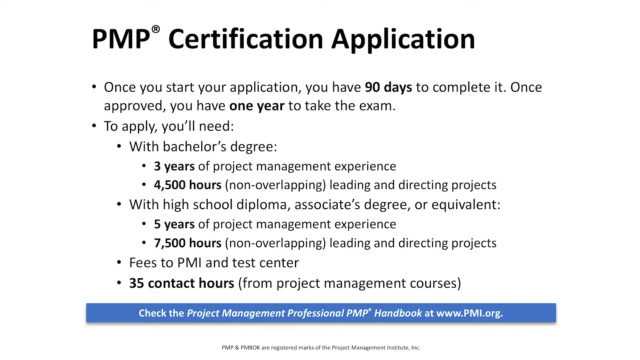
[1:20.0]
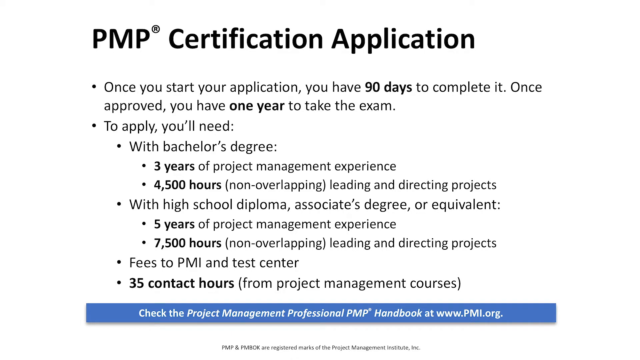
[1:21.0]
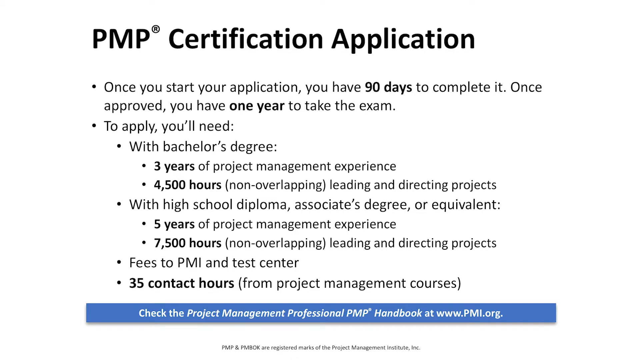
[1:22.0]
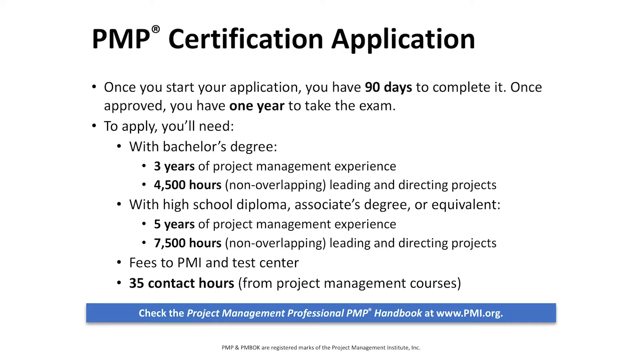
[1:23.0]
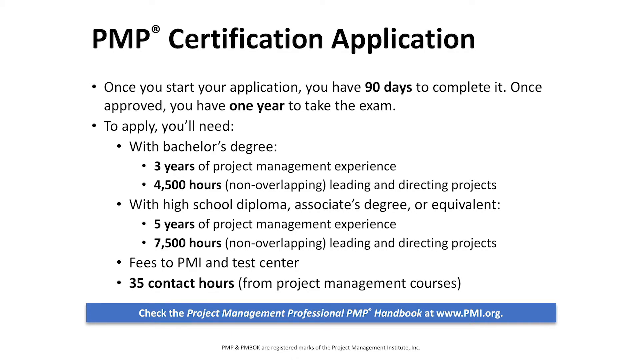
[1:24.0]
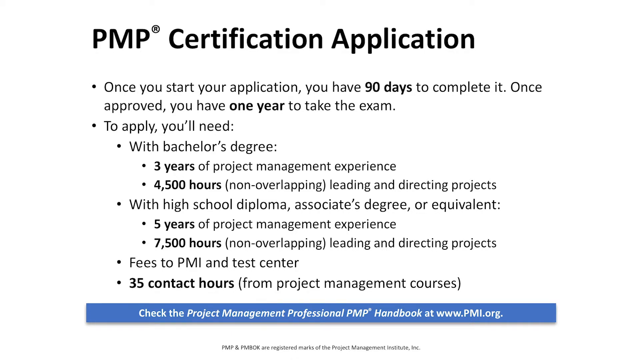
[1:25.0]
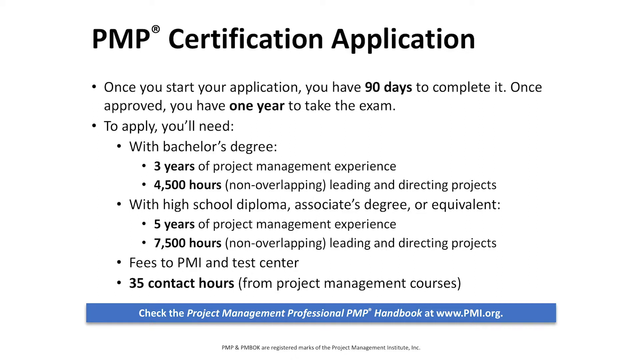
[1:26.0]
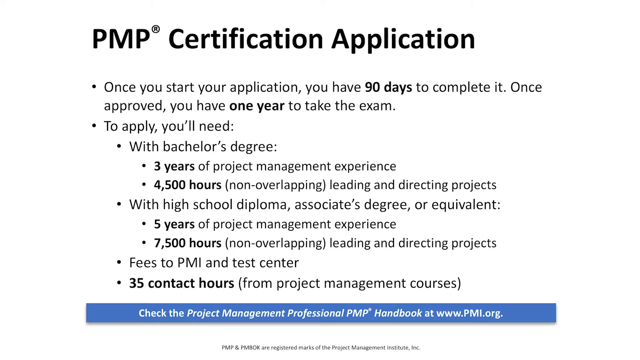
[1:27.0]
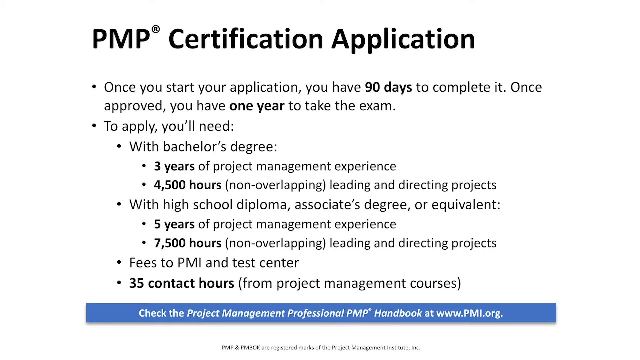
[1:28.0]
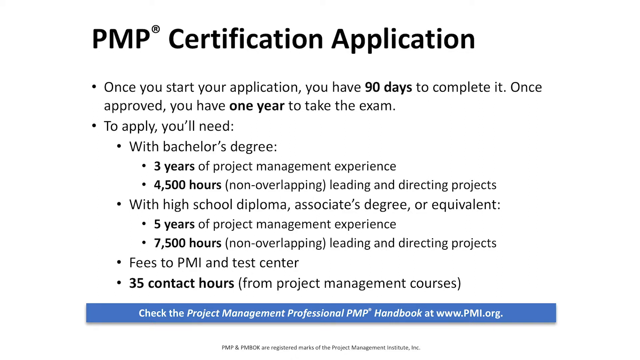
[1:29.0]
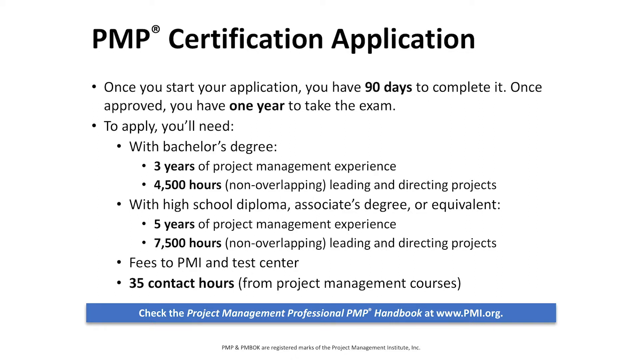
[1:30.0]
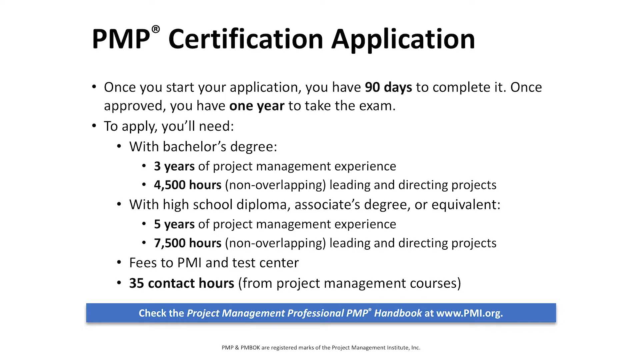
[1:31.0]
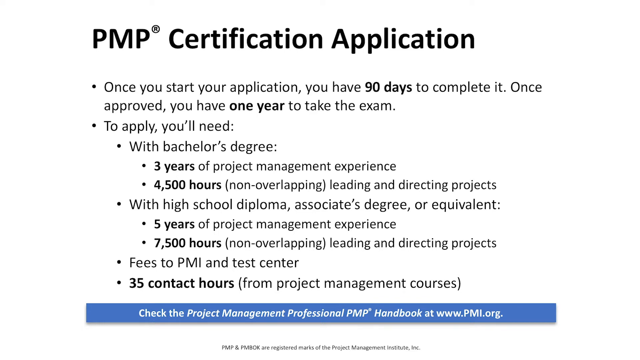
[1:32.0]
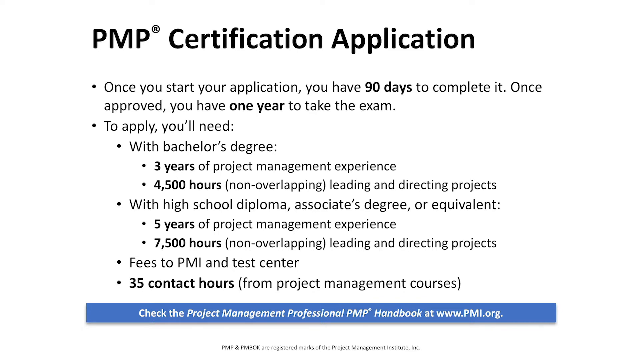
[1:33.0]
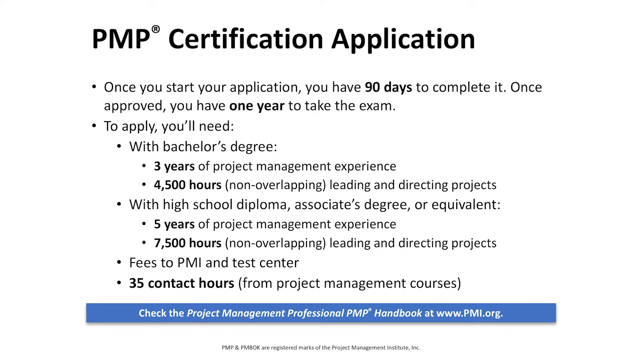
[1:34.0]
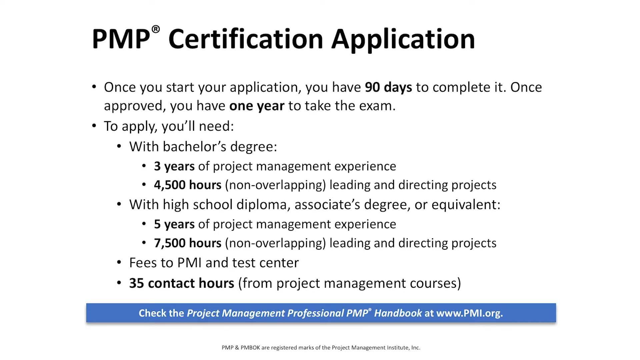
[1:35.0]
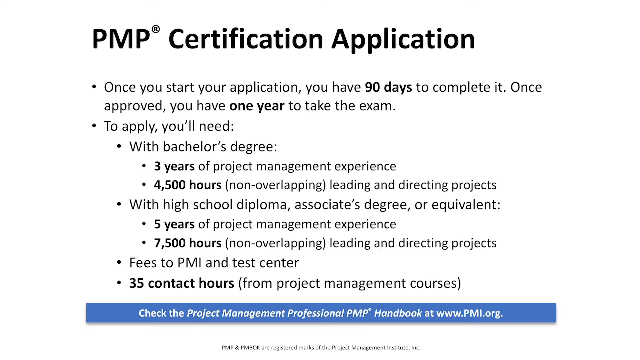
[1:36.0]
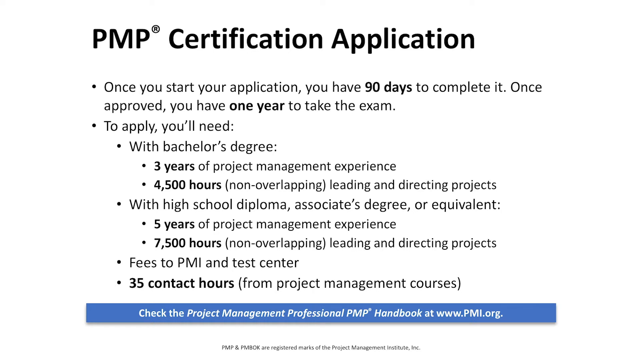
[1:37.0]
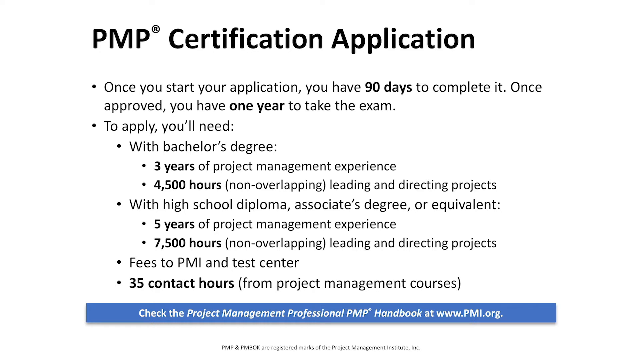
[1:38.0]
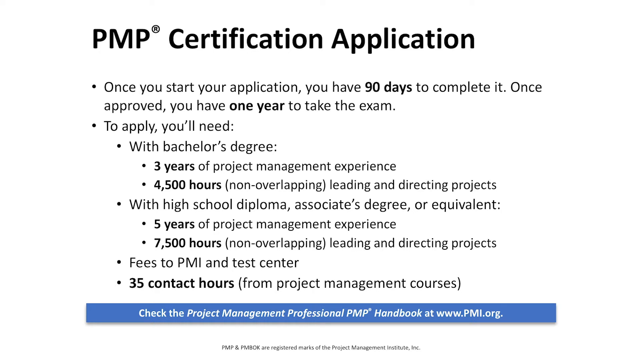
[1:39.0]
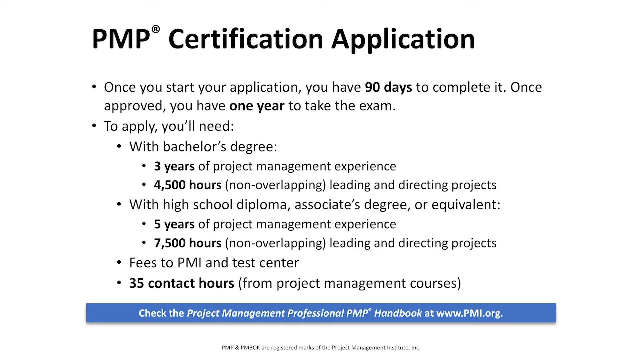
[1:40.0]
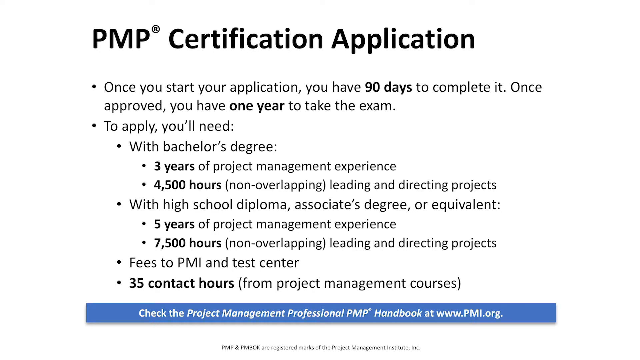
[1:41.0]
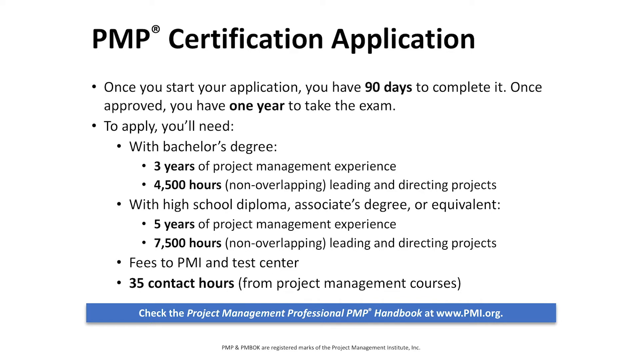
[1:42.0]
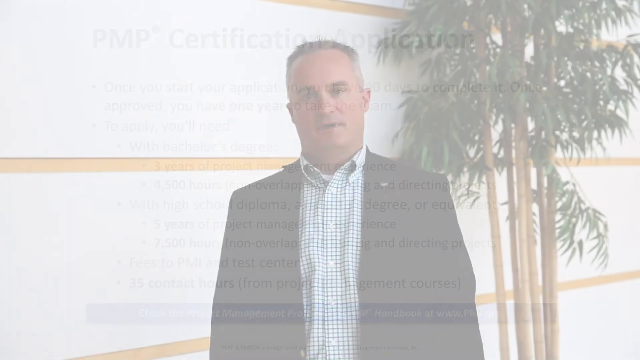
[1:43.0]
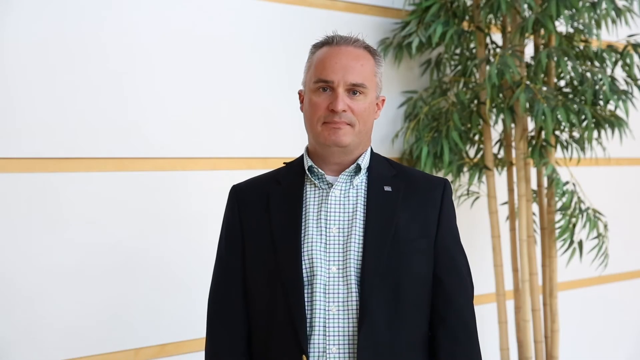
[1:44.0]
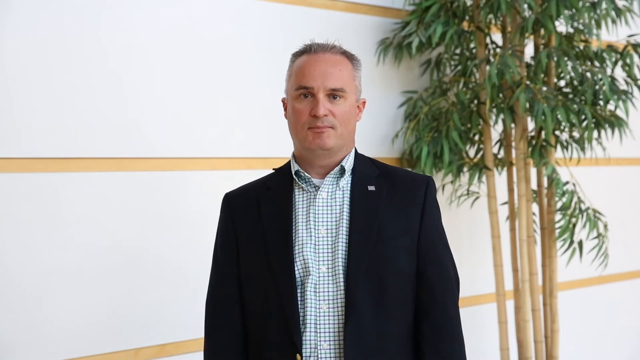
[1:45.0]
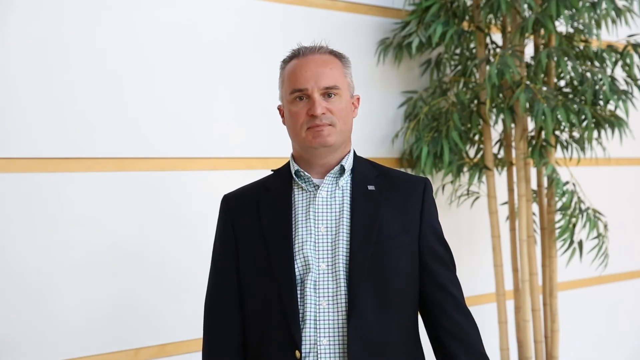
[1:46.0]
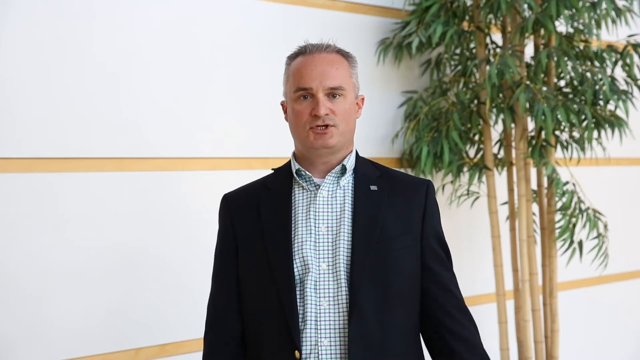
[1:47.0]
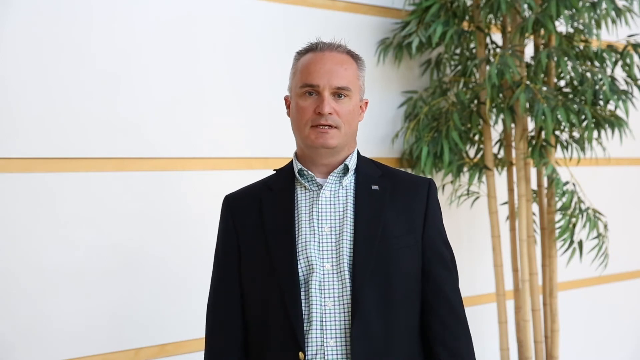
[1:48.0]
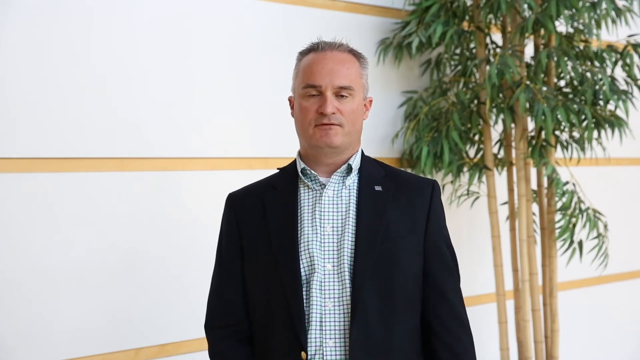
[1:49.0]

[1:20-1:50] The PMP certification application information is still on screen, then the video cuts back to Chris. As he talks, he moves his body and both hands, and at one point he is maybe tapping on his side. He makes bodily movements as if about to walk forward and then back, but he does not walk. His head also moves at a slow pace.